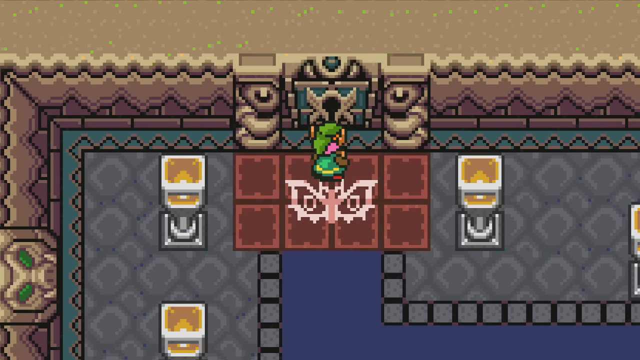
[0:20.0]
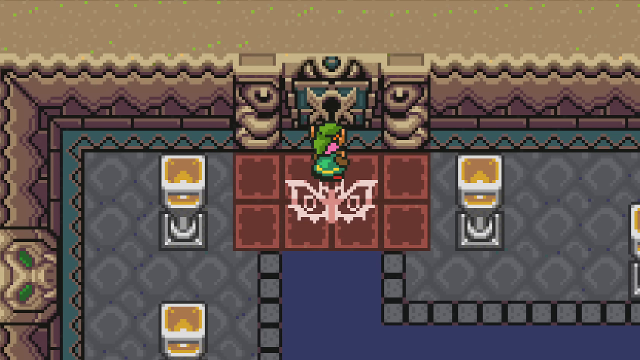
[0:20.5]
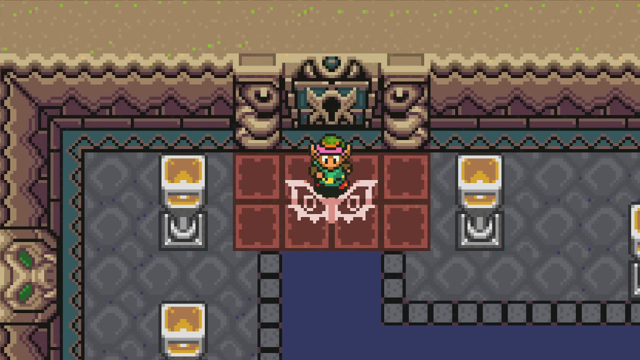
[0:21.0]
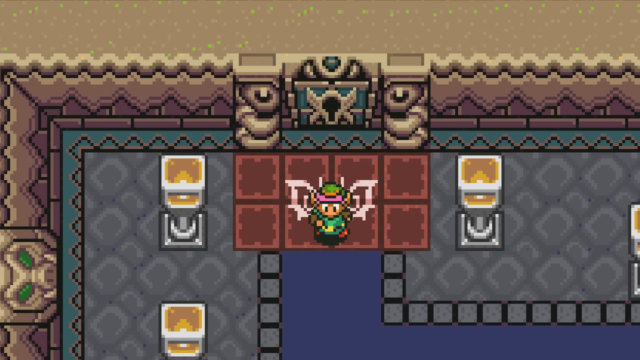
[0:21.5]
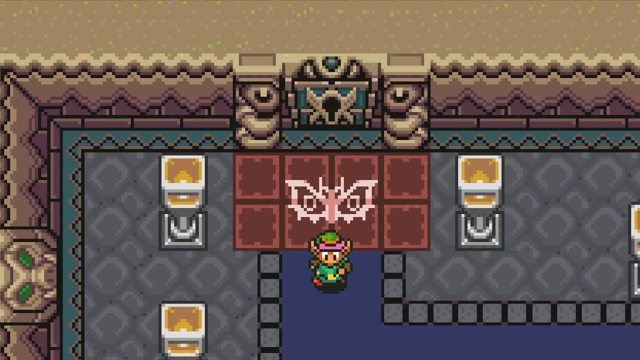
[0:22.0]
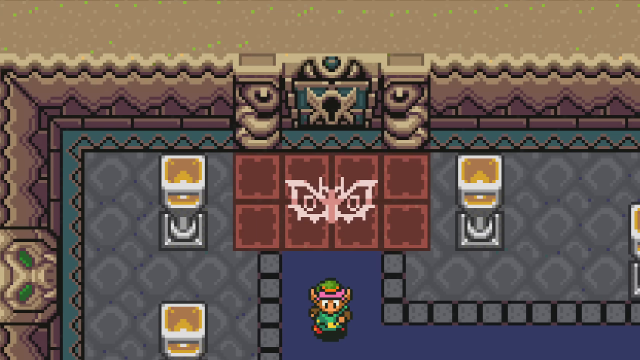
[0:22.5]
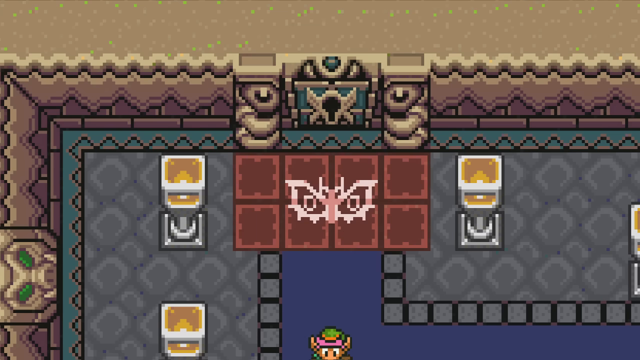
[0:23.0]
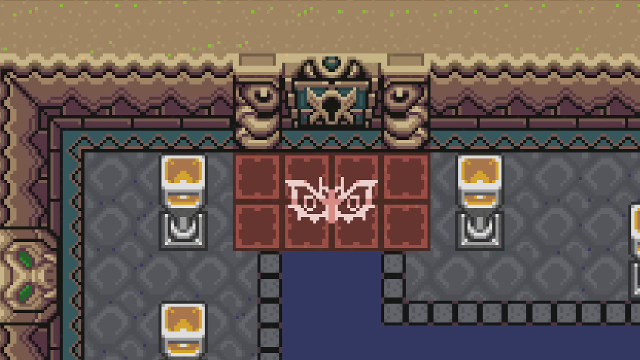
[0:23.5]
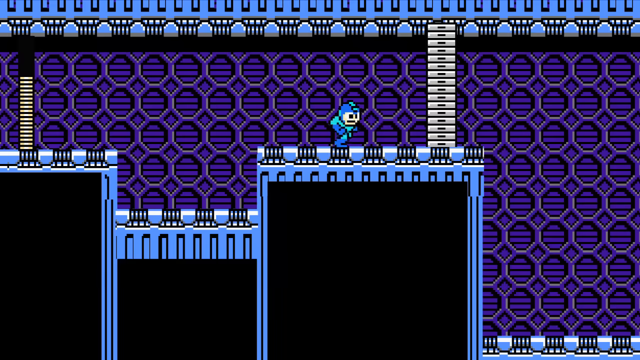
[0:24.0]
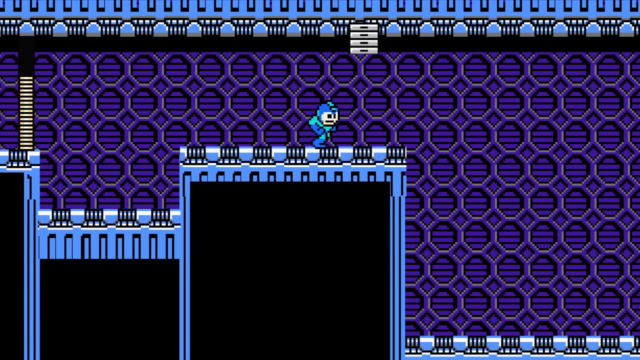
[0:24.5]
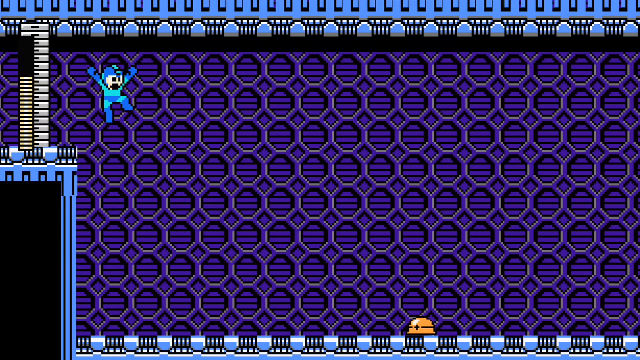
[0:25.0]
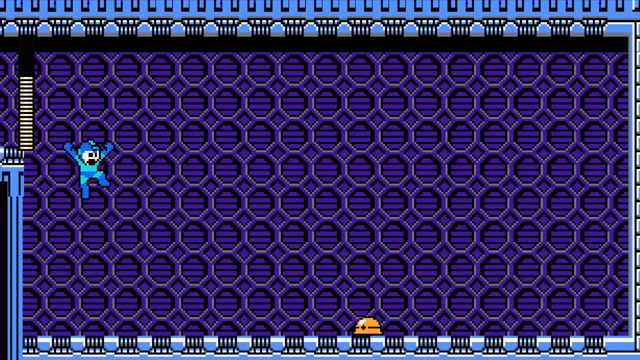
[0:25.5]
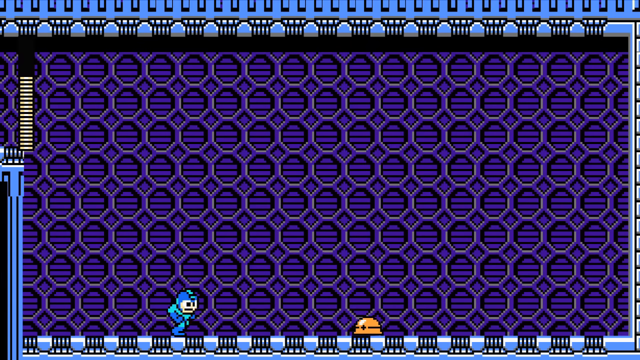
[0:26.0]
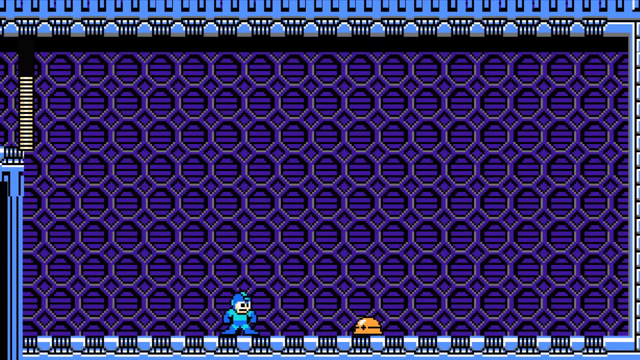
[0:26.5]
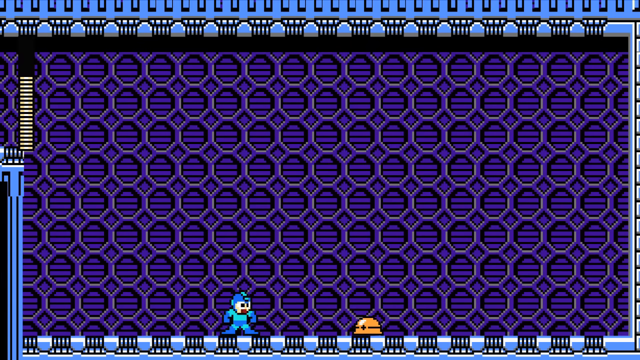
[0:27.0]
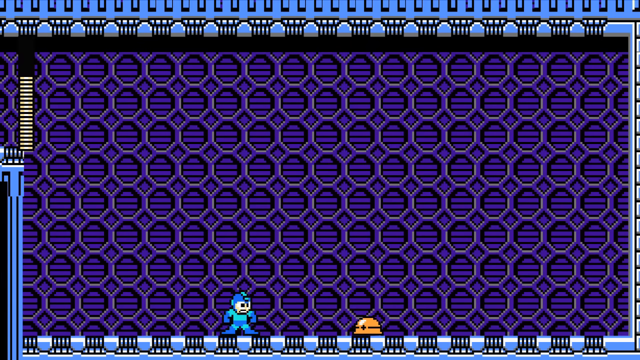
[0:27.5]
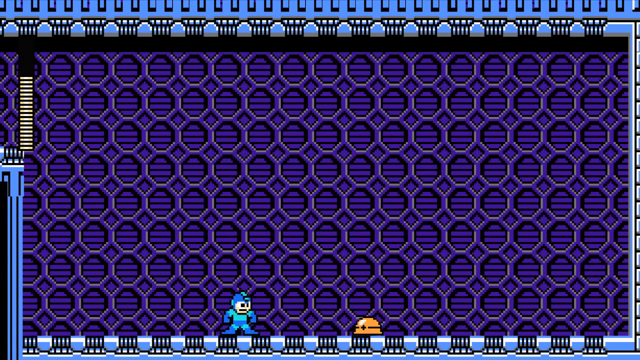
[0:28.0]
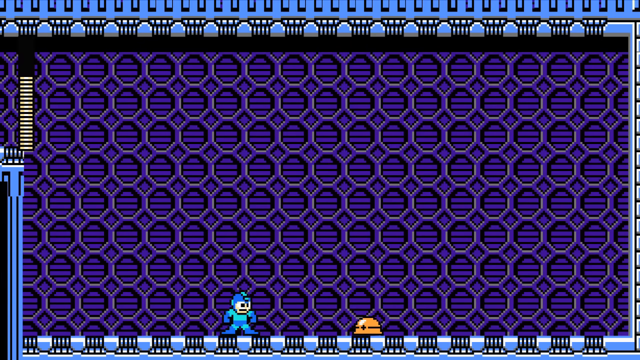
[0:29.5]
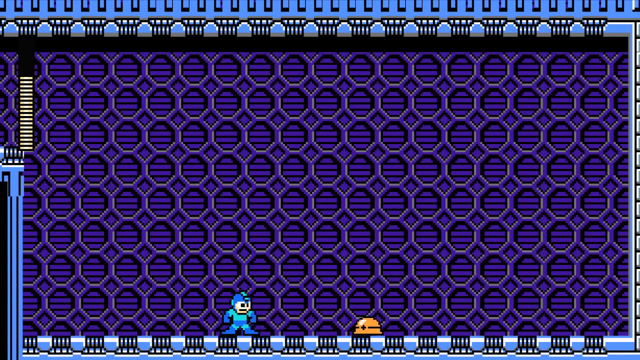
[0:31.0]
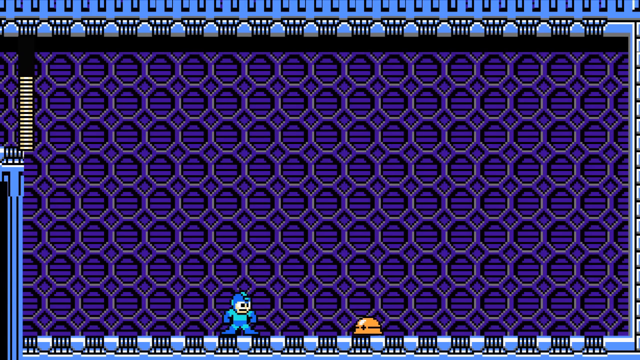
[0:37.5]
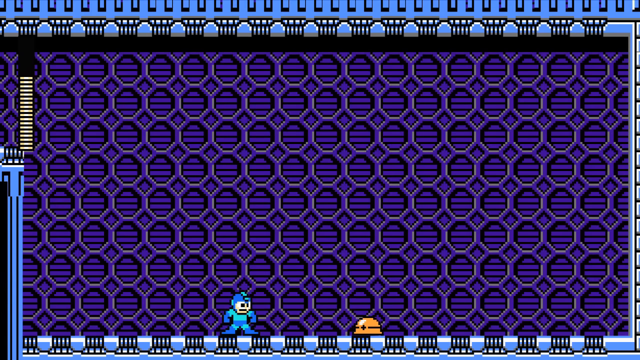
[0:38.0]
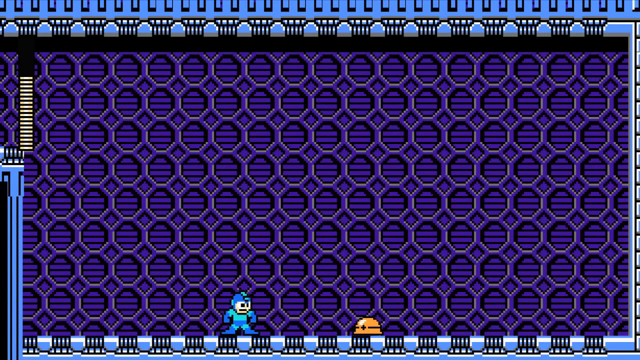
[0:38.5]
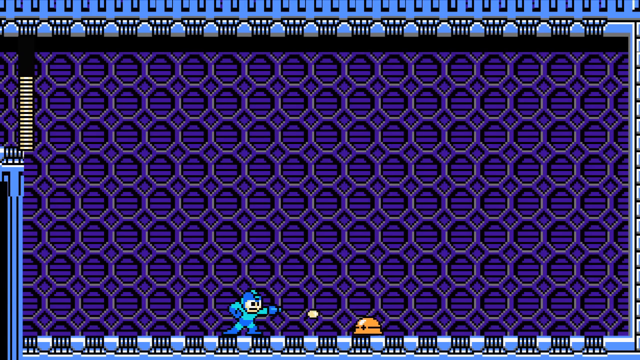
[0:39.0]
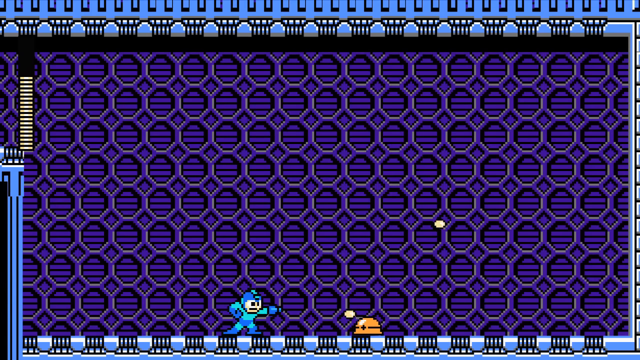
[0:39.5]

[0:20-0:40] The Zelda character continues to stand alongside the door with the very big lock, then walks away. Next comes what is apparently a Mega Man game being played. Several circular objects are in the background of the screen. The Mega Man character wears a light blue suit, and next to him is an orange helmet. After standing next to the orange helmet for a while, he starts shooting several objects that look like orange circular objects toward it. There are no humans or animals in the video, which is rectangular in shape and computer generated. Most of the colors are brown, green, pink, blue, purple and yellow.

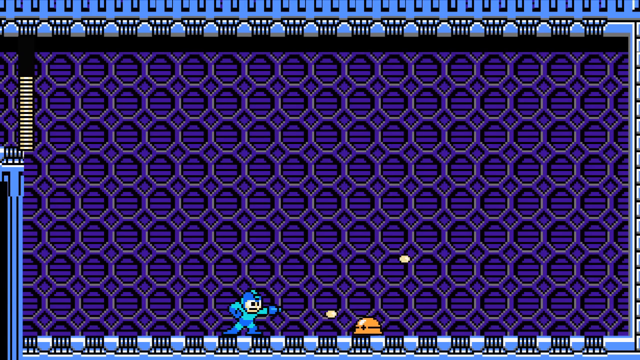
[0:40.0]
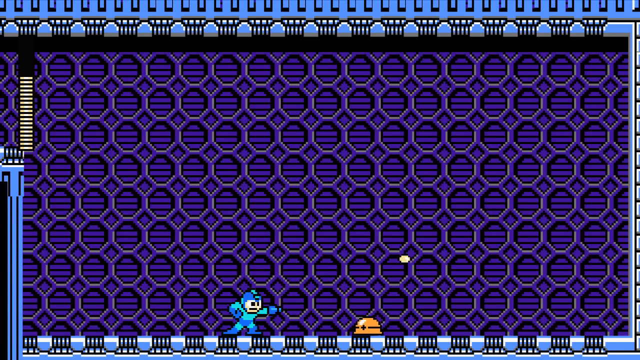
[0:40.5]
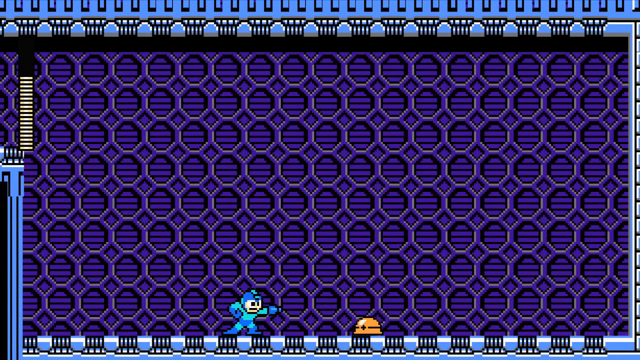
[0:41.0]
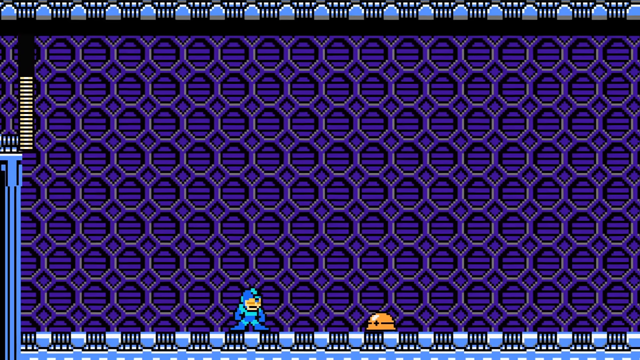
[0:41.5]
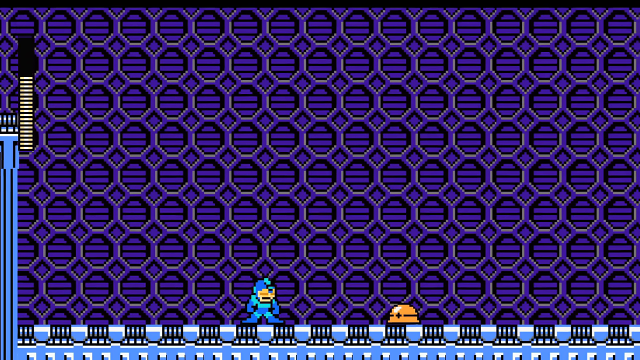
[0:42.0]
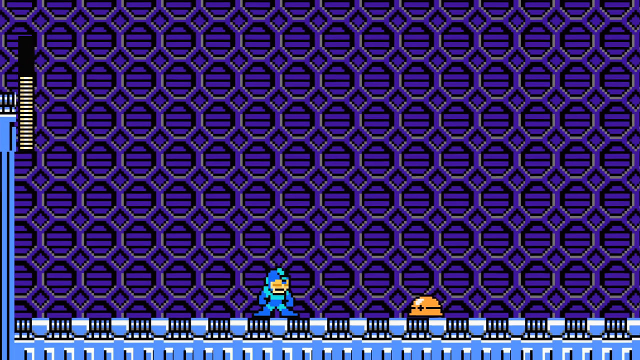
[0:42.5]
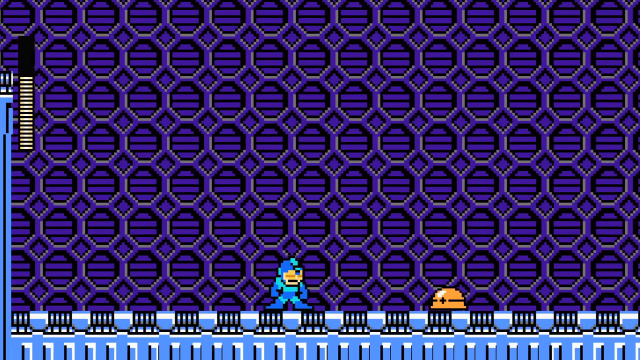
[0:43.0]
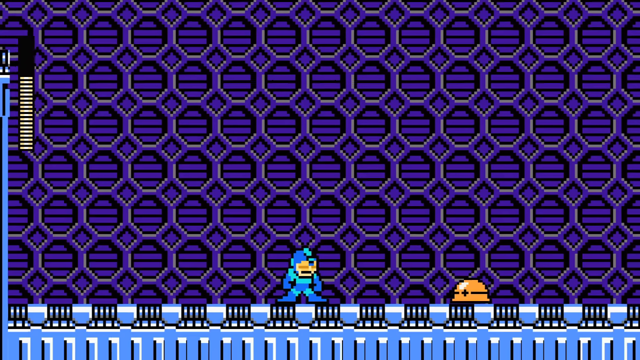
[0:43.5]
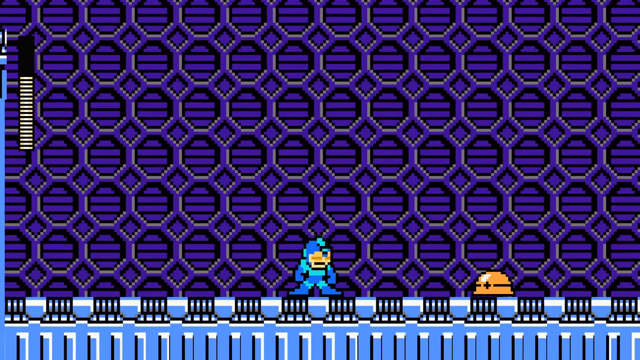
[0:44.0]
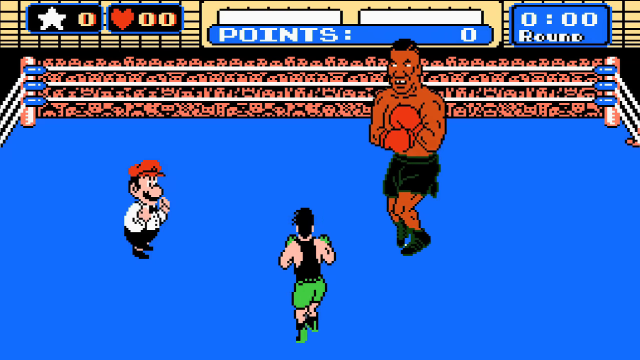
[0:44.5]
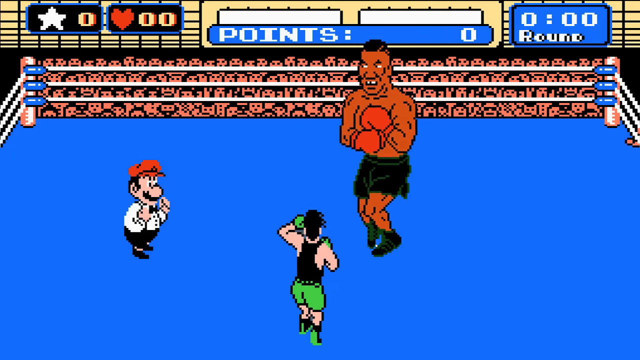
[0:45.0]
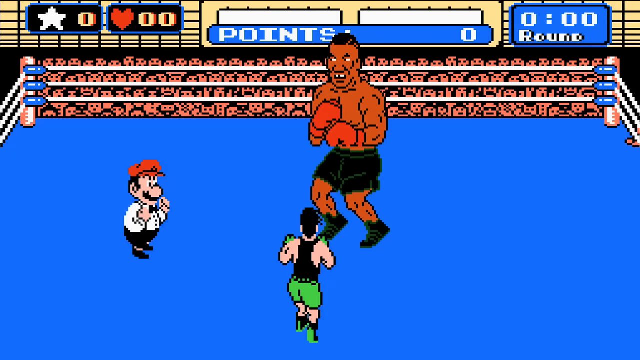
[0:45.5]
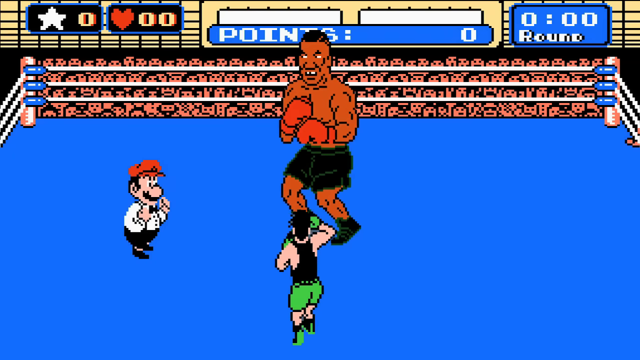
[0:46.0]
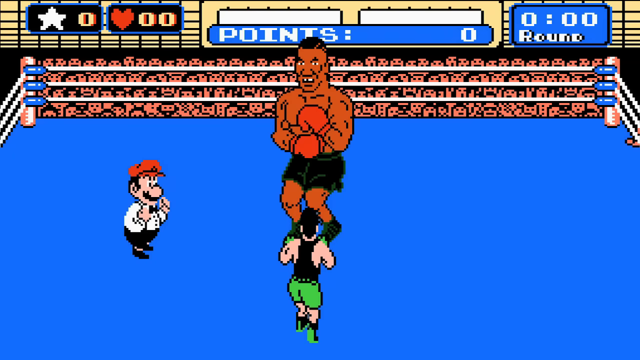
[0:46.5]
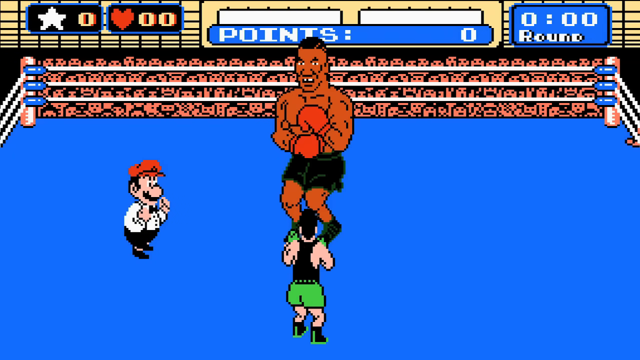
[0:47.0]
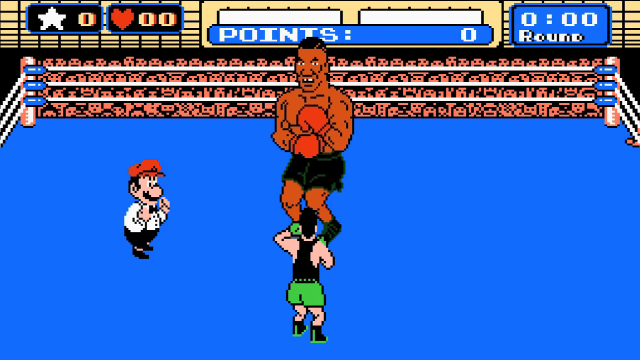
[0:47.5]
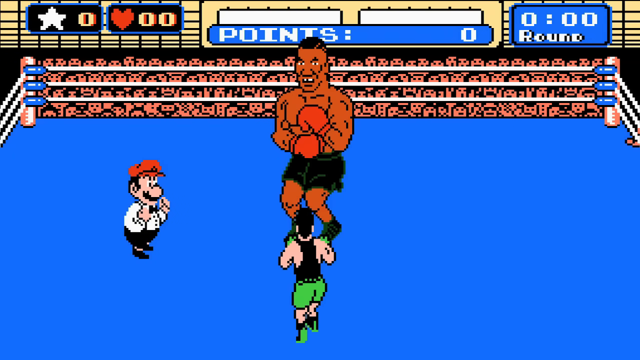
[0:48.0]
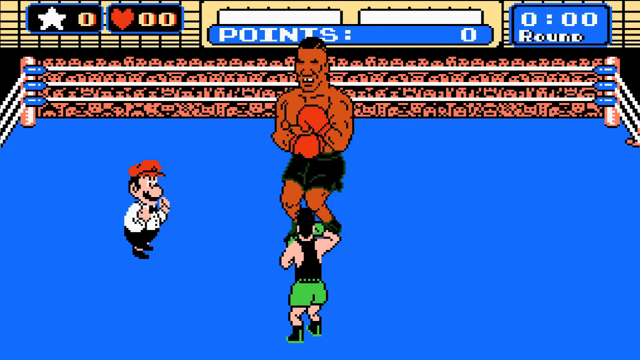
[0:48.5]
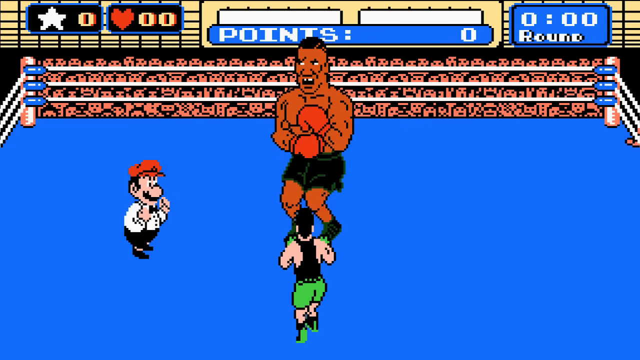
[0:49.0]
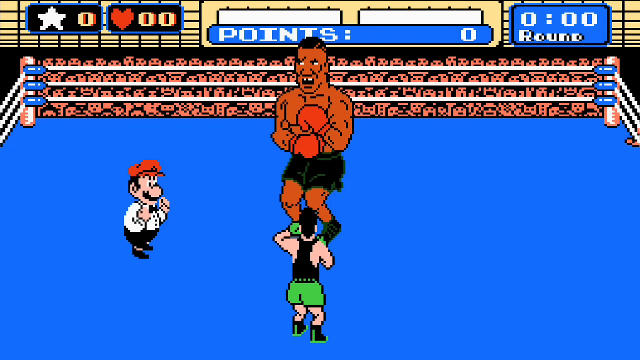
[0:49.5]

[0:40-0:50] The Mega Man character keeps shooting round circular objects toward the orange helmet, then stops with an expression on his face that looks to be disappointment. Next is a screen from what looks to be the Mike Tyson boxing game. The Mike Tyson character is fighting a character wearing green shorts and a black tank top. Next to both of them is a stubby, chubby referee wearing a red hat and a black and white uniform suit. In the upper left corner there is a star logo, next to it the number zero, next to that a heart logo, and after that two double zeros. Text then reads "points; 00; 00 round".